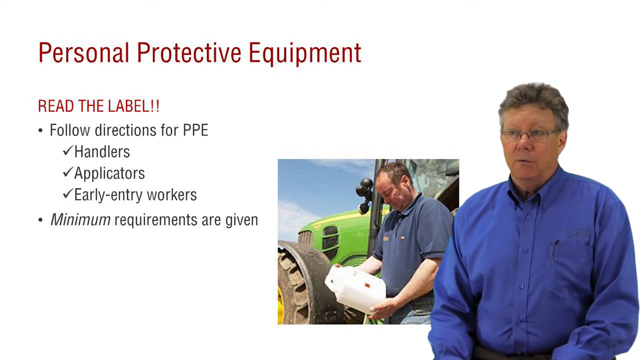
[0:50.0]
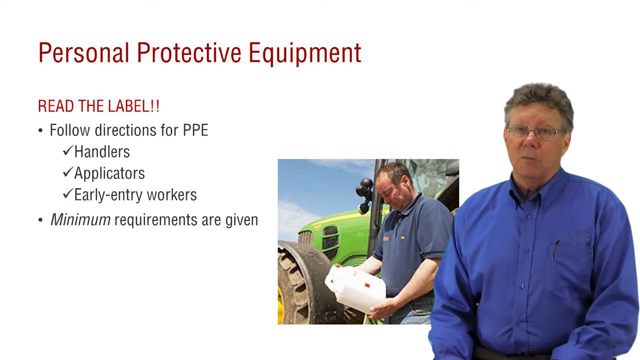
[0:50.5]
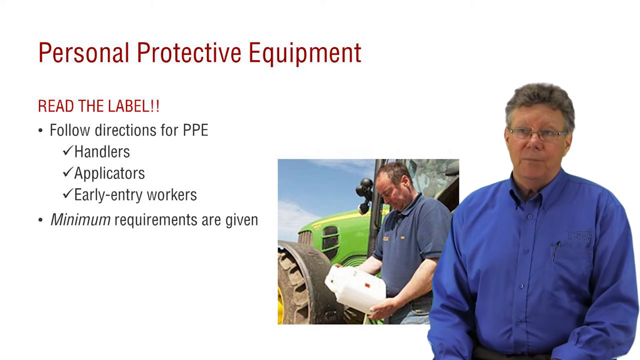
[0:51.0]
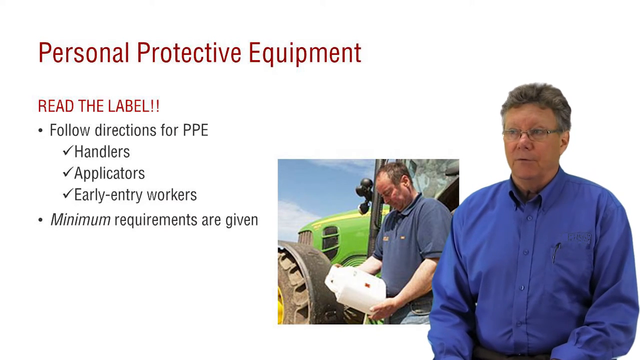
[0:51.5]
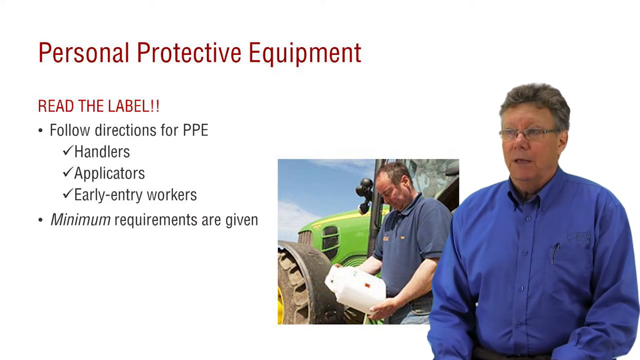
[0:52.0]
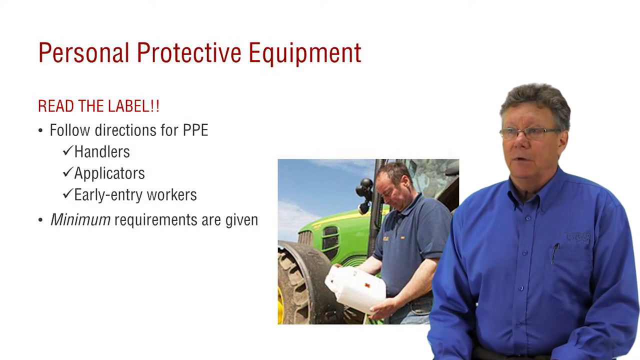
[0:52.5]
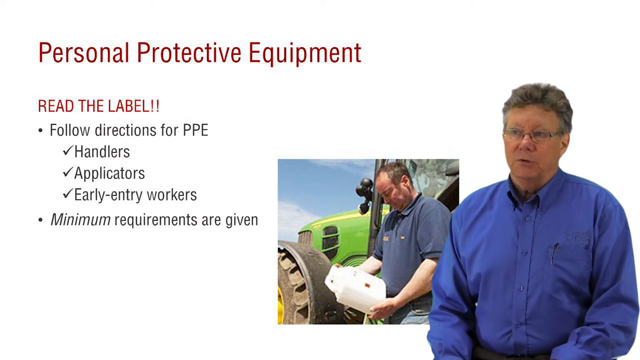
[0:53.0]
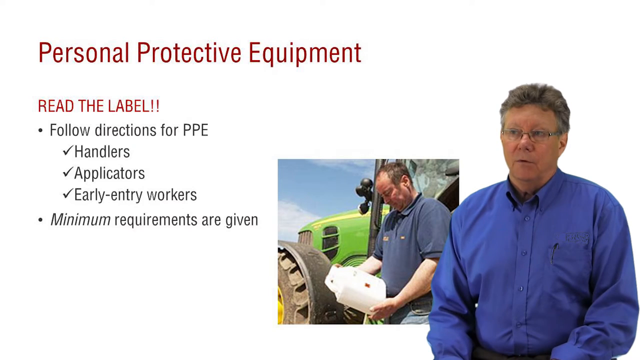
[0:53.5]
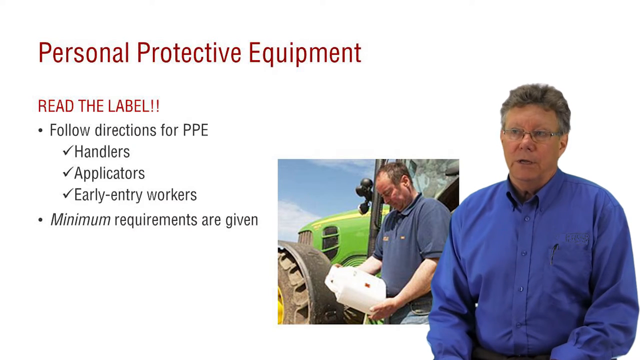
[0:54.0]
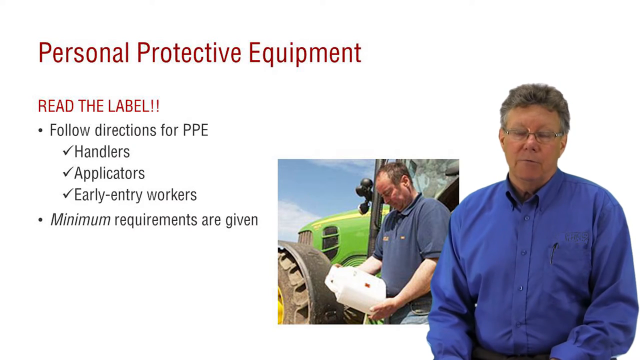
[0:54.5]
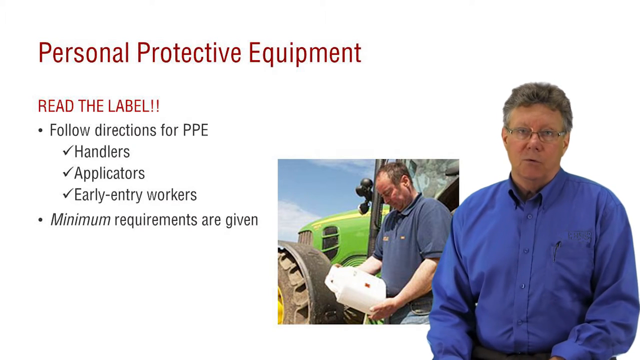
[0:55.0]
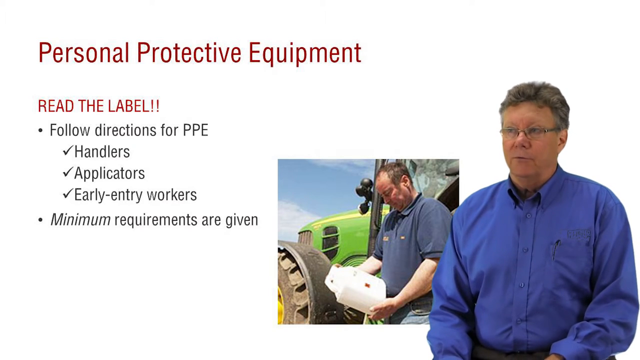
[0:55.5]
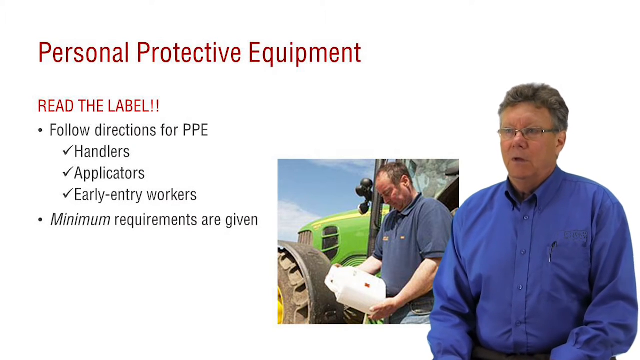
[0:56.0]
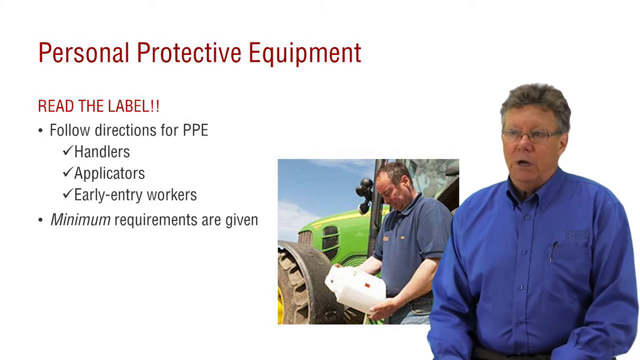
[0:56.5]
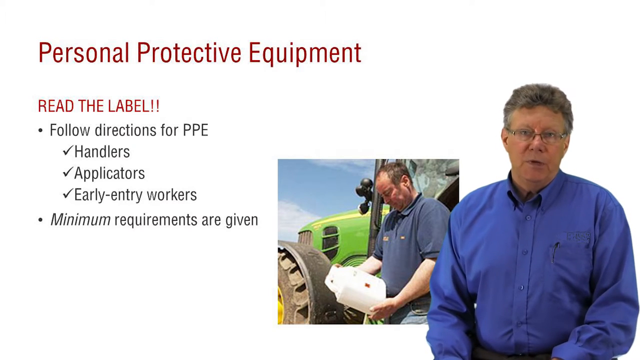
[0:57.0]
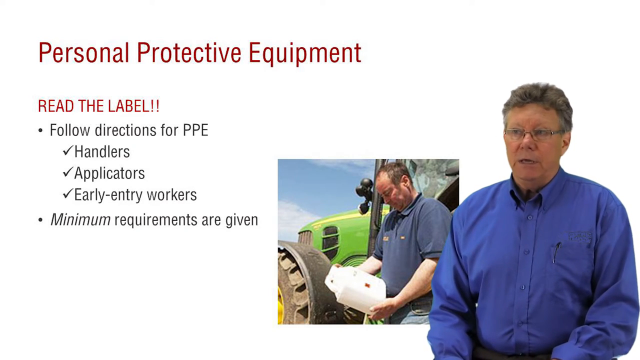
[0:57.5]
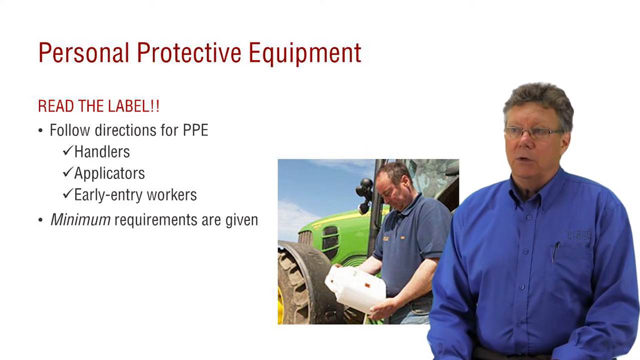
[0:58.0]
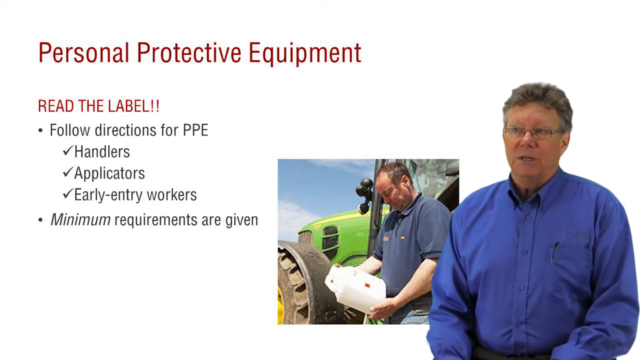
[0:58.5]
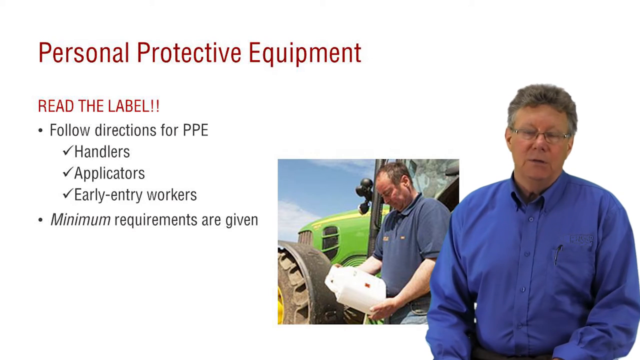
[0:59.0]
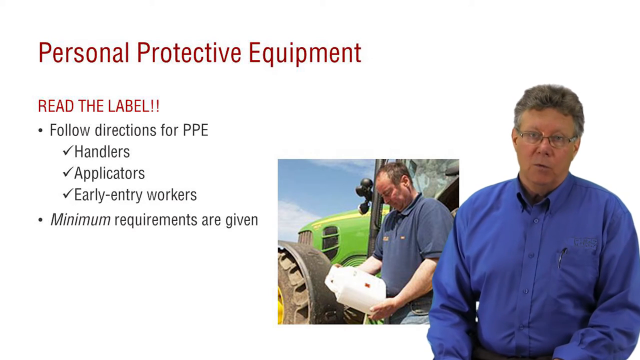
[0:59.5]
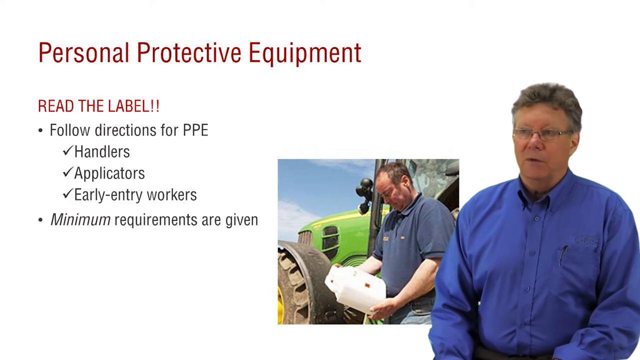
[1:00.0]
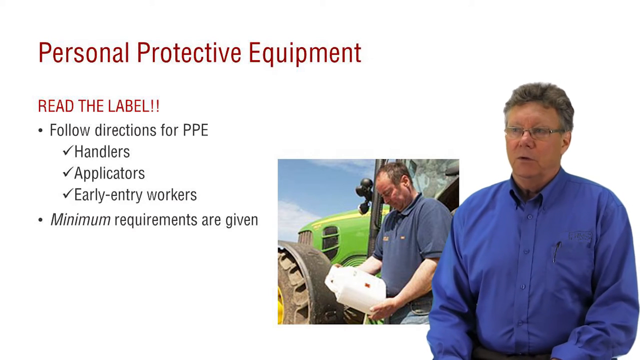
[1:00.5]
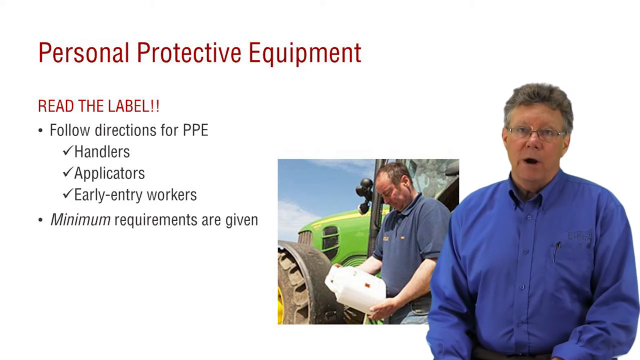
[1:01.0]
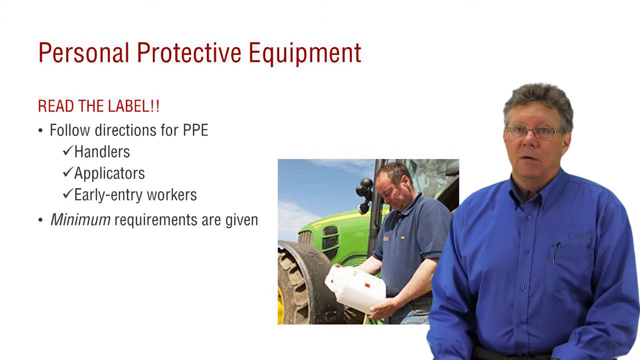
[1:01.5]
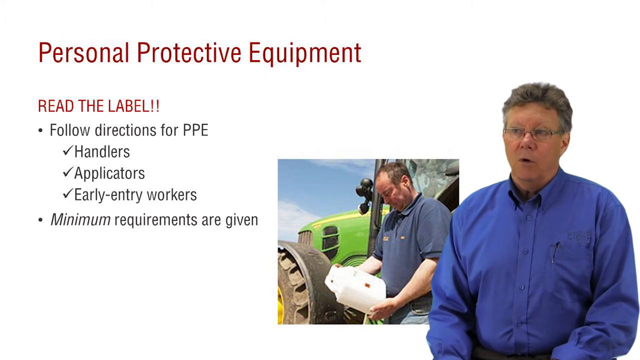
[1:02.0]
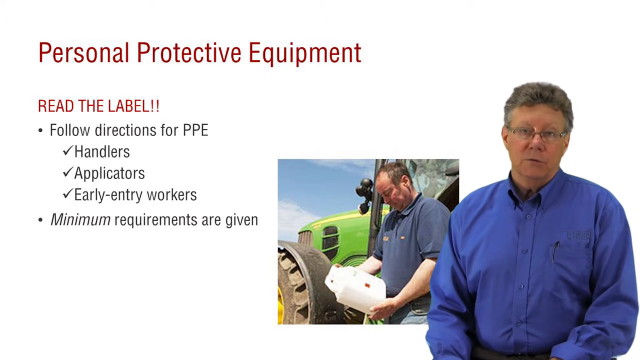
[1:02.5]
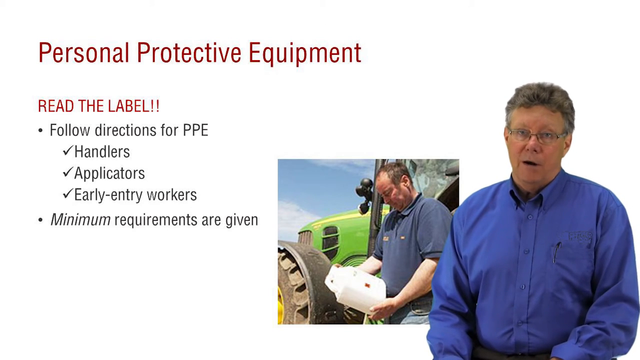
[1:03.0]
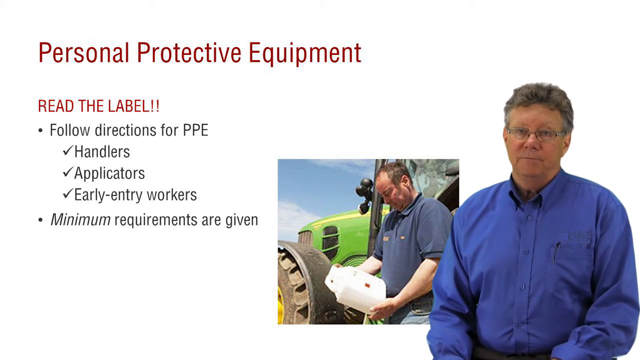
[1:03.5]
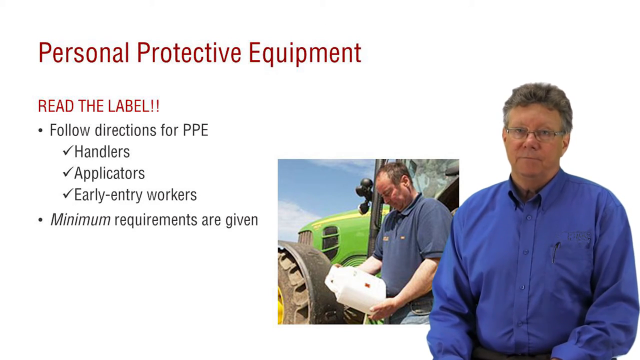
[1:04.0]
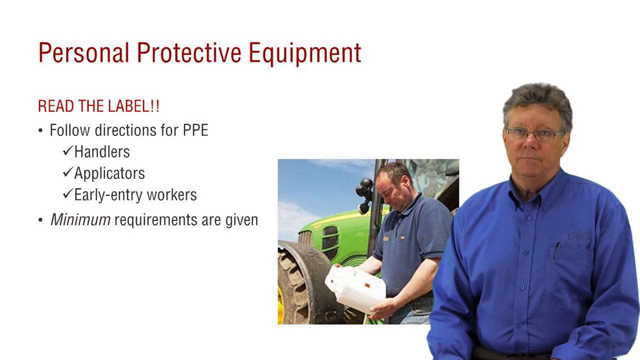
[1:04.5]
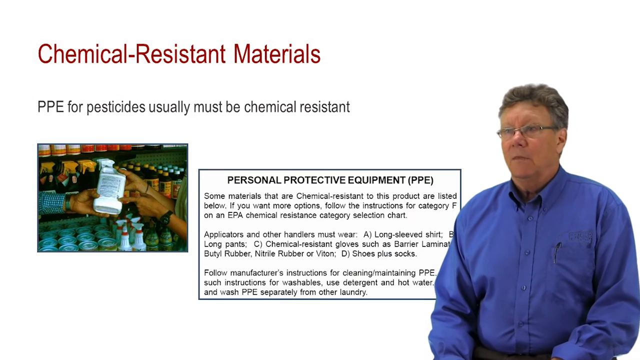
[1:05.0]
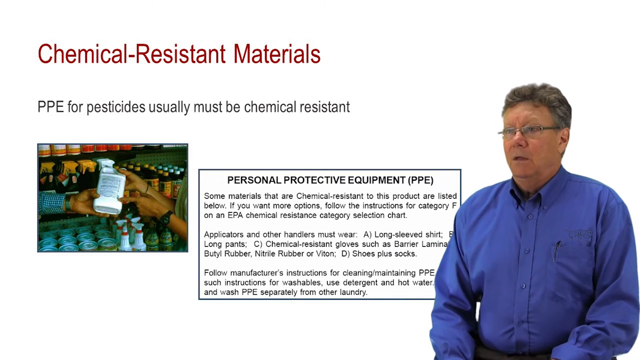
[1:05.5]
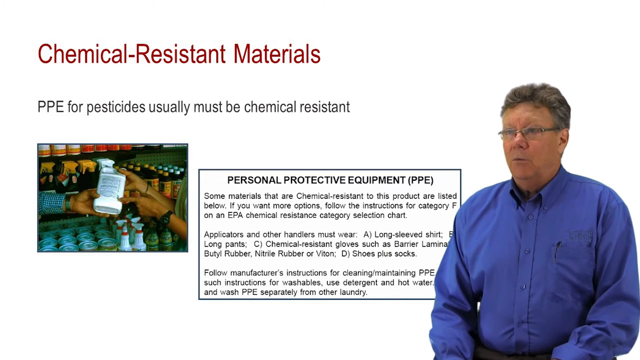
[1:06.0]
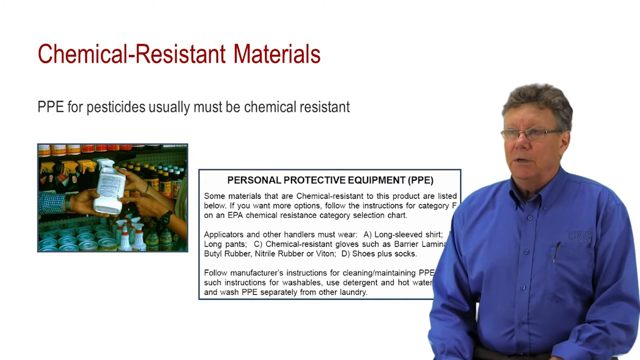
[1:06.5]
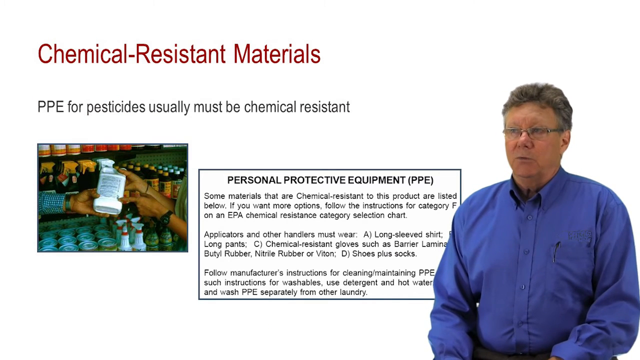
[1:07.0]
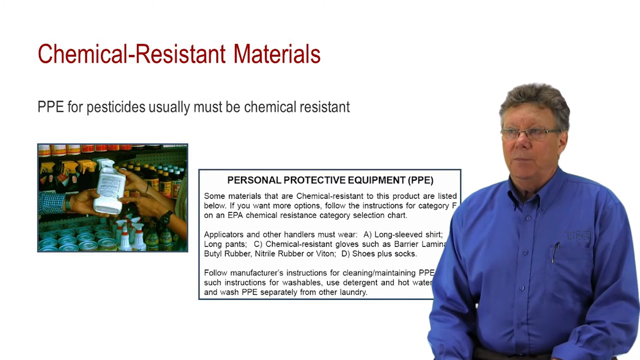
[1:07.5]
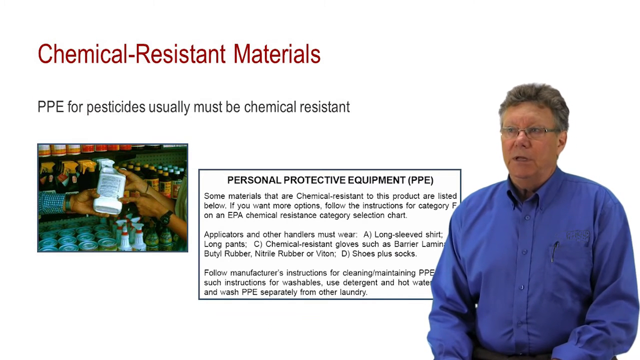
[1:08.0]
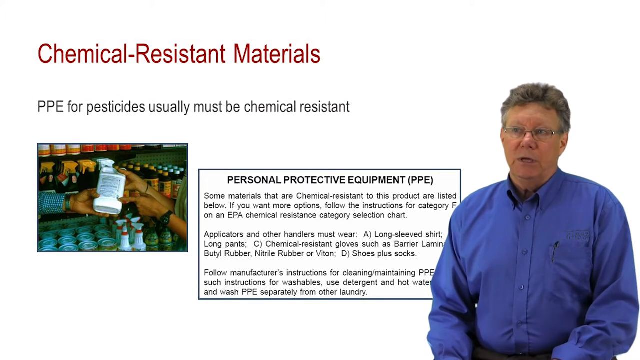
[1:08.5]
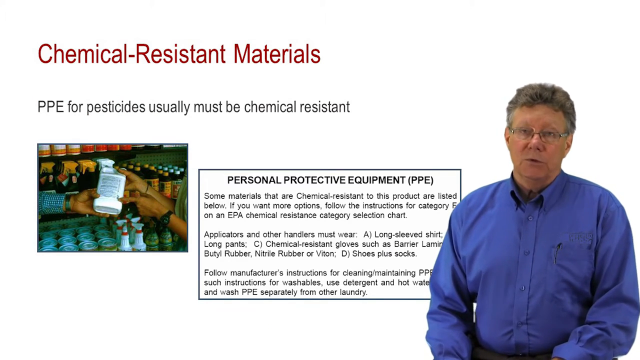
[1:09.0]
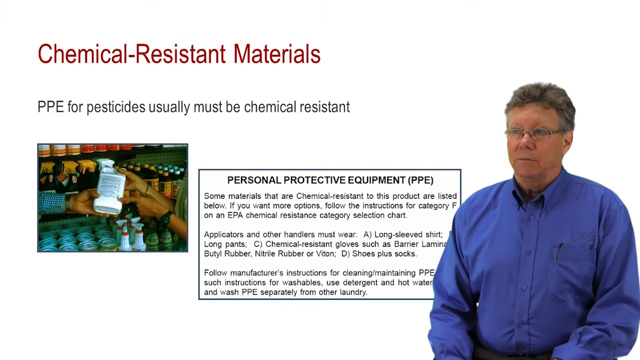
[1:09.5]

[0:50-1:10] A screen shows "personal protective equipment" in red, then in red all caps "read the label," and in black "follow directions for PPE," followed by "handlers," "applicators" and "early entry workers," each with a checkmark, and "minimum requirements are given." A man sits by a green tractor with big tires, holding a white bottle with red lettering and looking at it. A man in a blue button-down shirt, with a pen in his pocket, glasses and grayish-brown hair, speaks against a white background, nodding his head as he talks. Then a store is shown with pesticide equipment on shelves, and people look at a bottle. Text reads "chemical resistant materials" at the top and "PPE pesticides usually must be chemical resistant," followed by "some materials that are chemical resistant to this product are listed below. If you want more options follow the instructions for category F on EPA chemical resistance category selection chart. Applicators and other handlers must wear a long-sleeve shirt, B long pants, C chemical resistant gloves such as barrier laminate, butyl rubber, nitrile rubber or viton, these shoes plus socks. Follow manufacturers instructions for cleaning maintaining PPE." The man keeps talking, and then the man by the tractor is shown looking at the bottle and reading it.